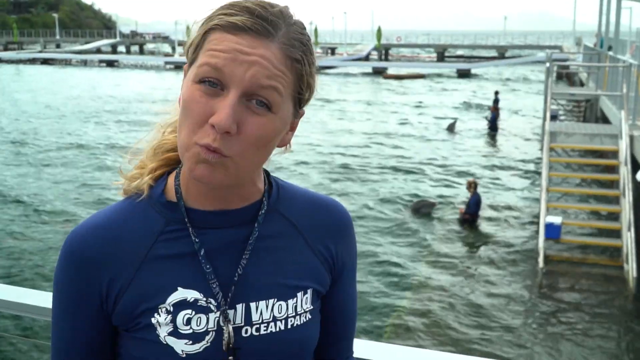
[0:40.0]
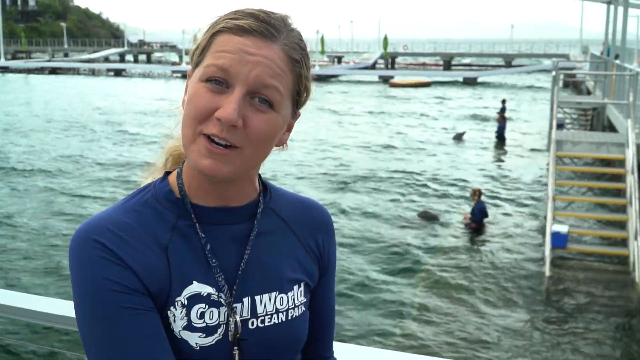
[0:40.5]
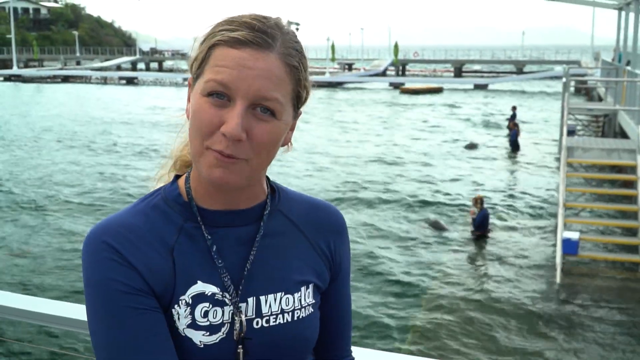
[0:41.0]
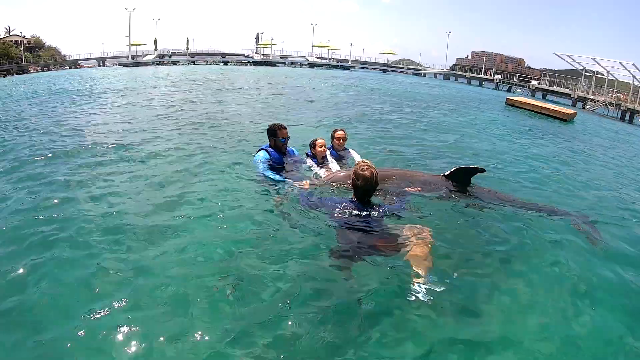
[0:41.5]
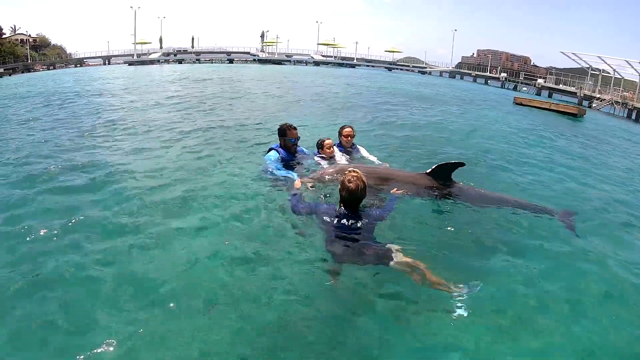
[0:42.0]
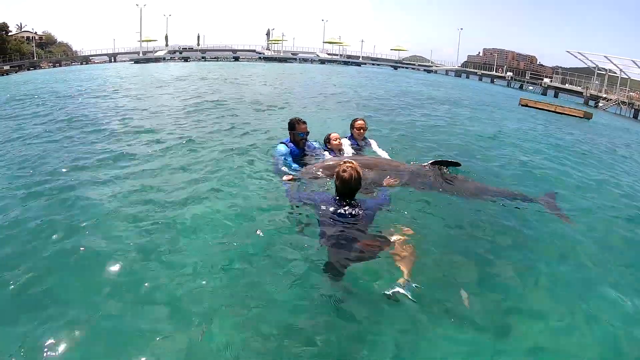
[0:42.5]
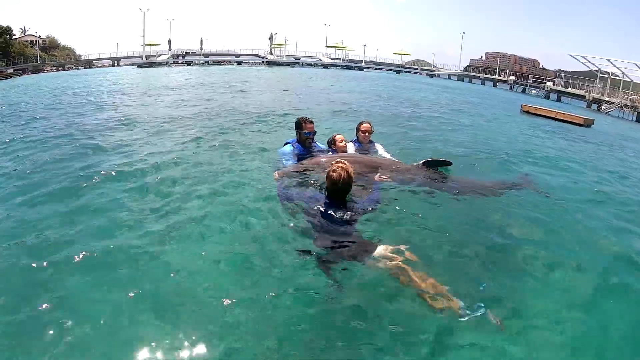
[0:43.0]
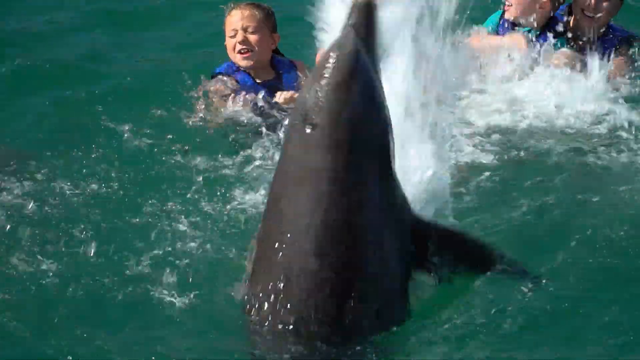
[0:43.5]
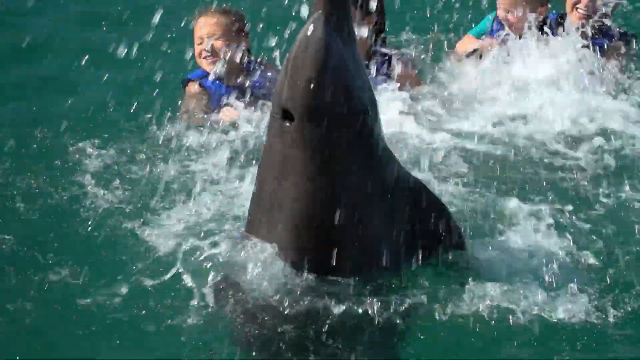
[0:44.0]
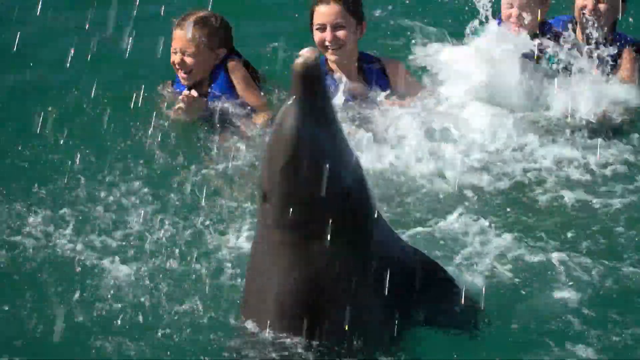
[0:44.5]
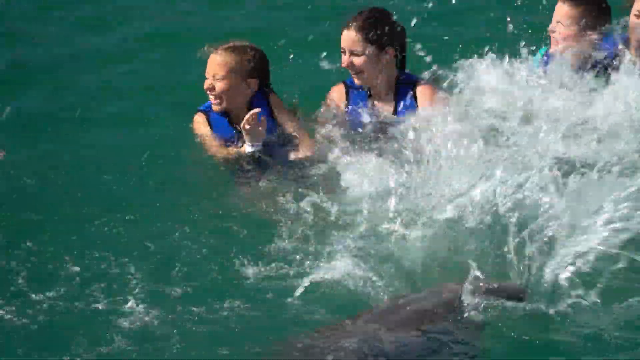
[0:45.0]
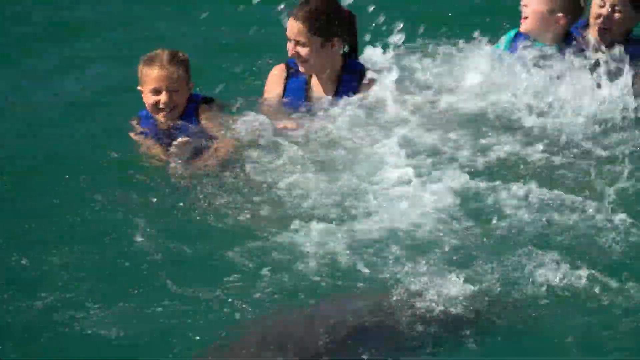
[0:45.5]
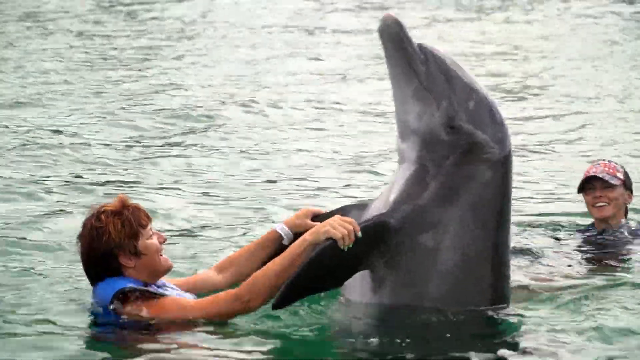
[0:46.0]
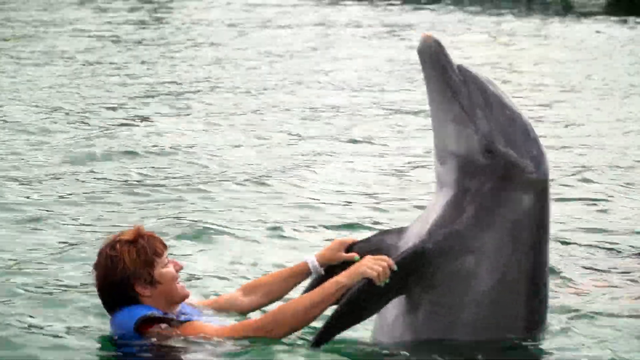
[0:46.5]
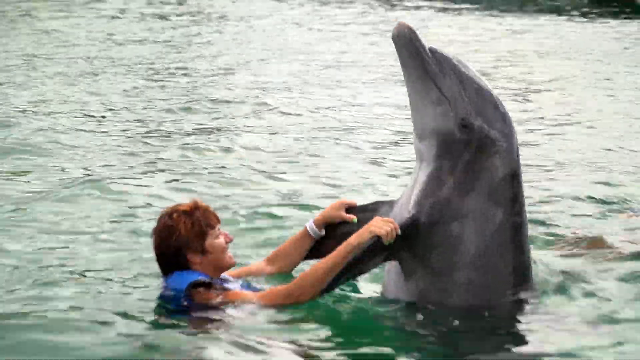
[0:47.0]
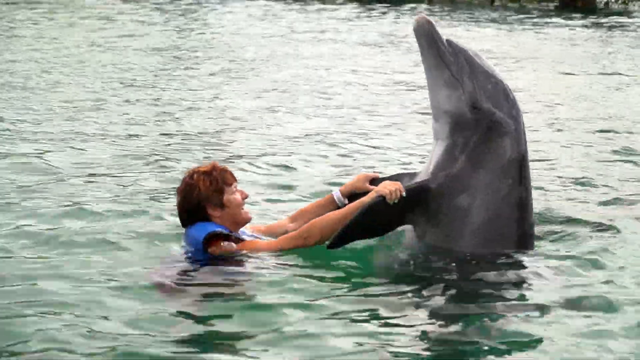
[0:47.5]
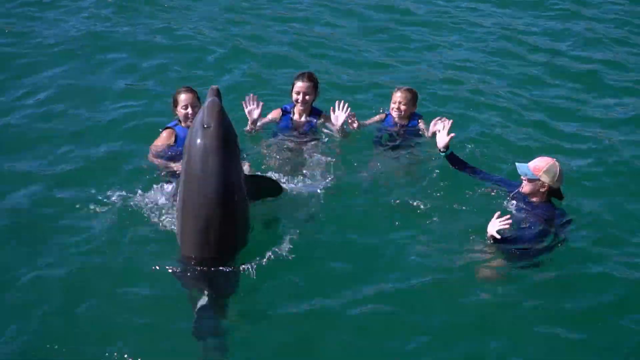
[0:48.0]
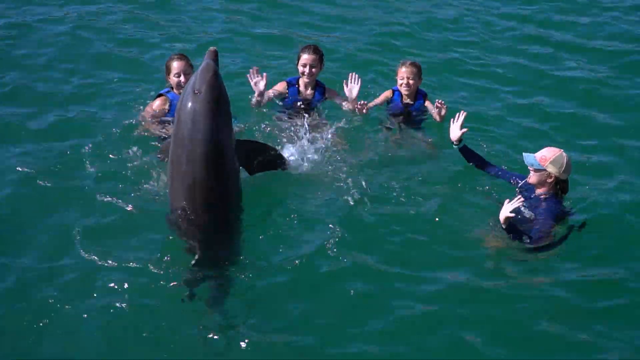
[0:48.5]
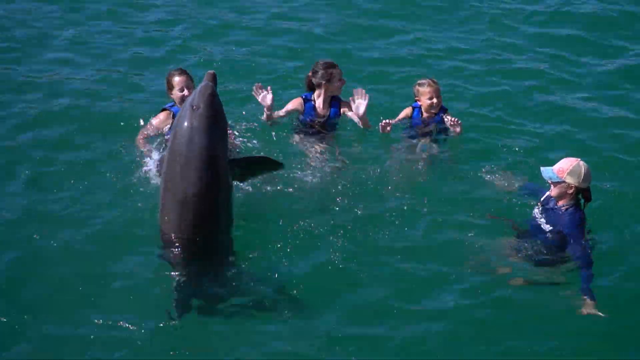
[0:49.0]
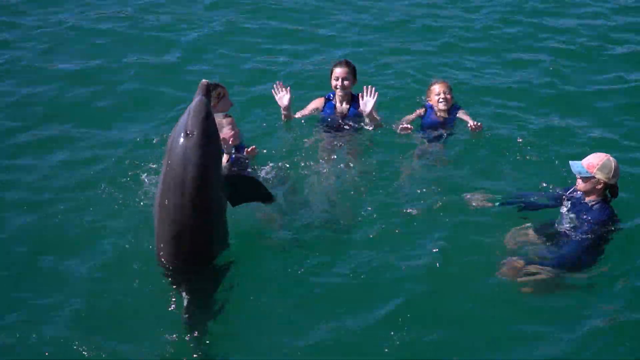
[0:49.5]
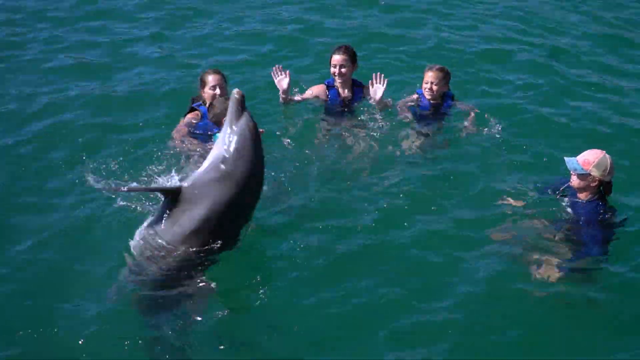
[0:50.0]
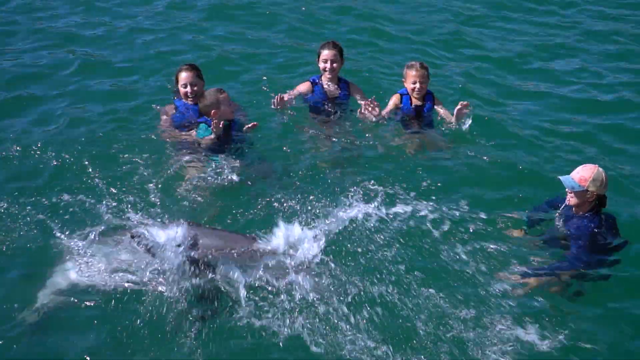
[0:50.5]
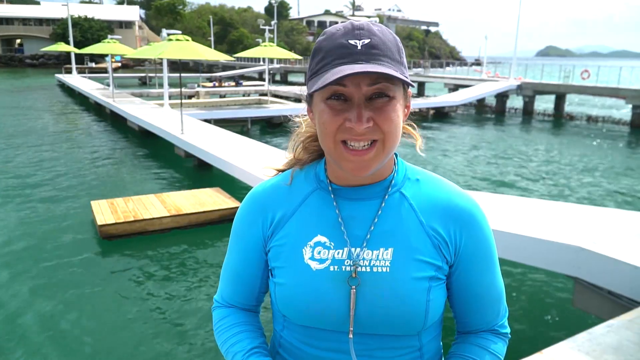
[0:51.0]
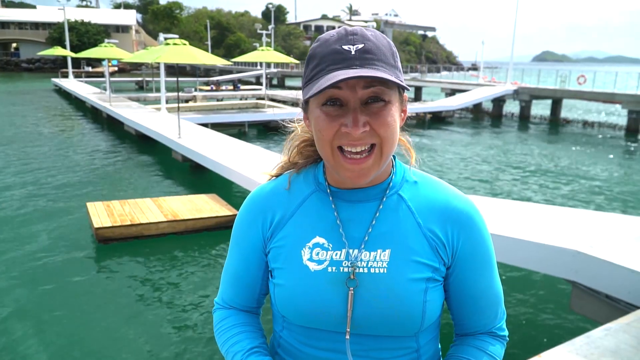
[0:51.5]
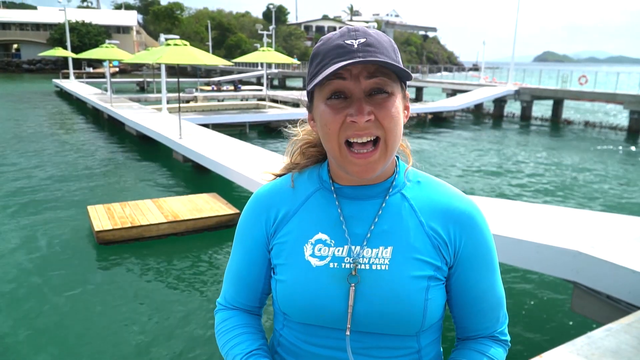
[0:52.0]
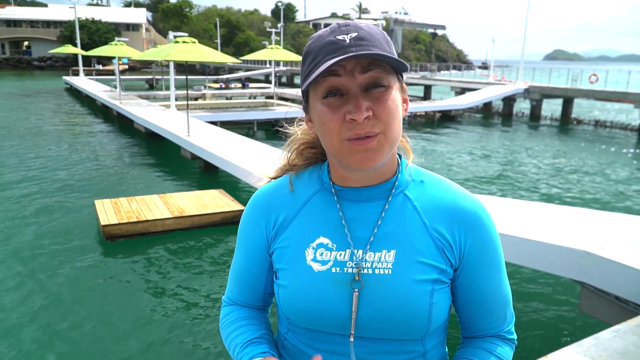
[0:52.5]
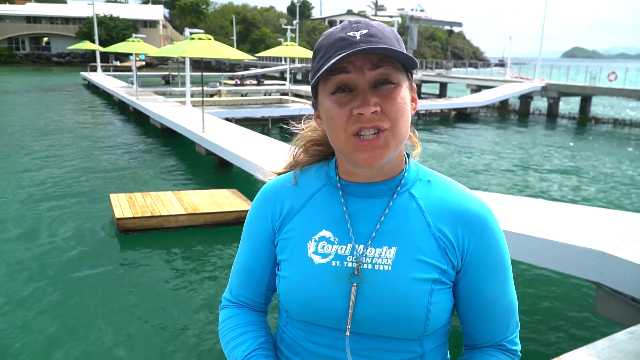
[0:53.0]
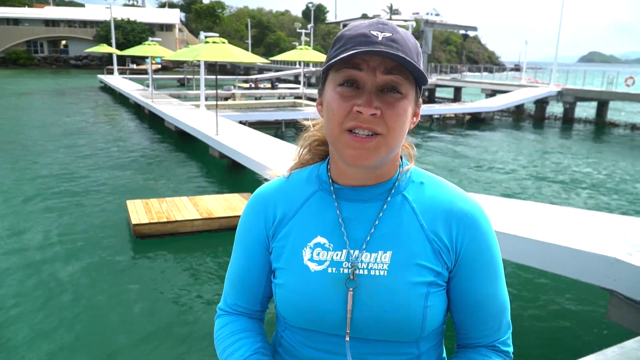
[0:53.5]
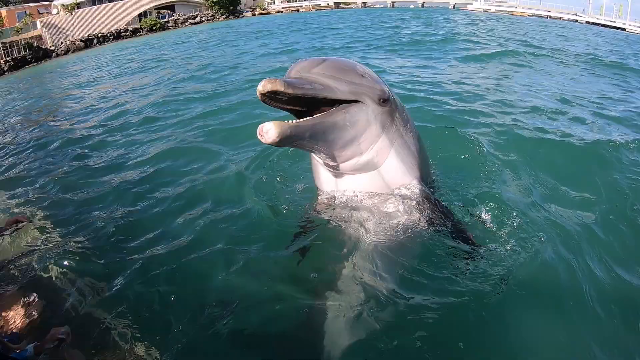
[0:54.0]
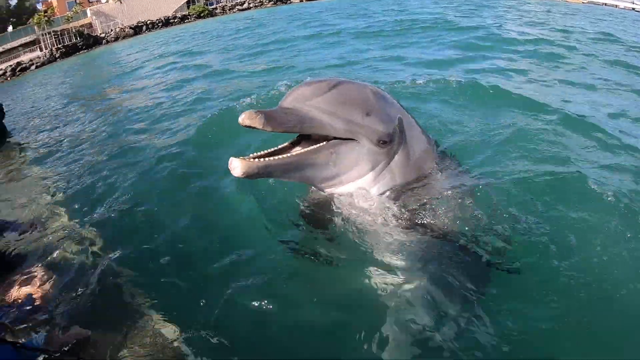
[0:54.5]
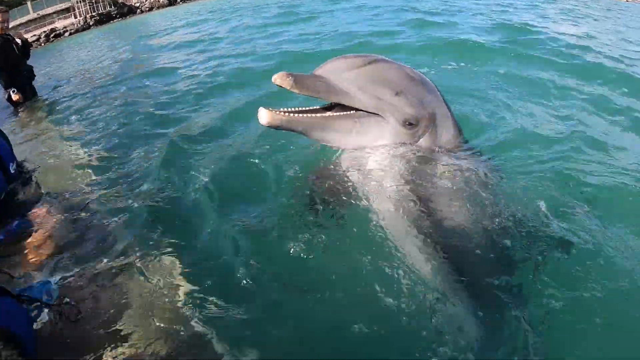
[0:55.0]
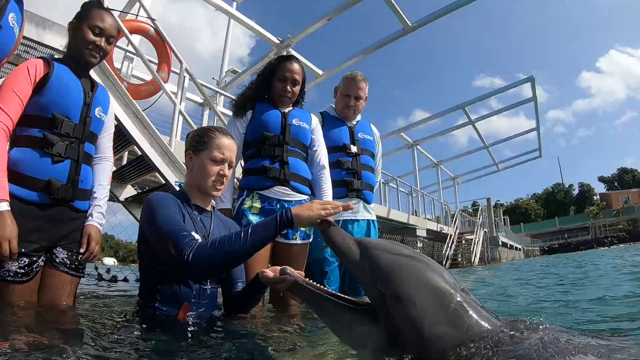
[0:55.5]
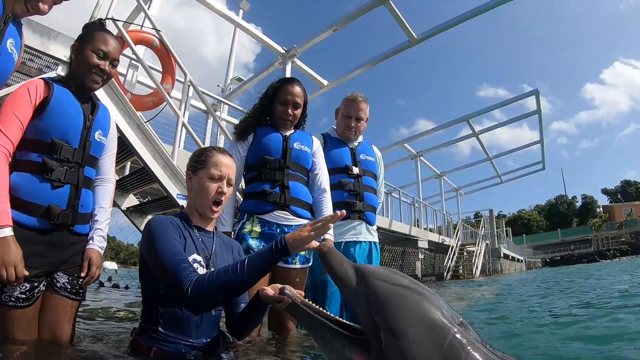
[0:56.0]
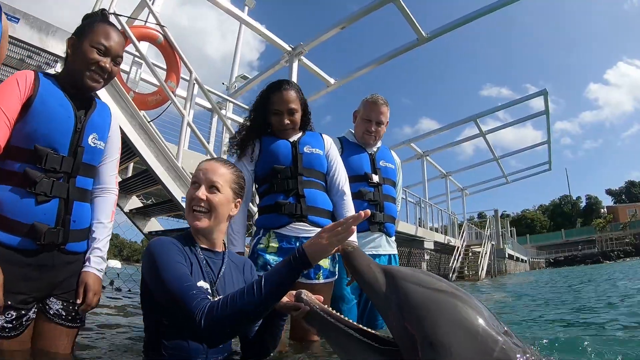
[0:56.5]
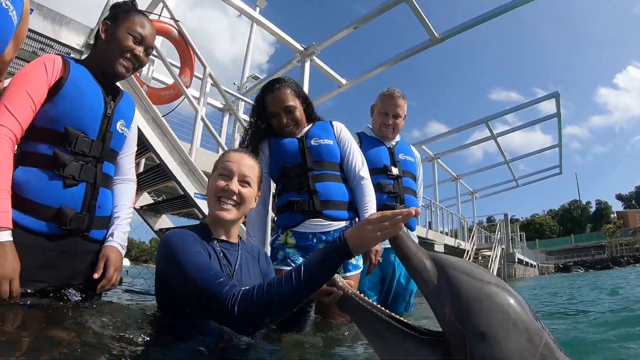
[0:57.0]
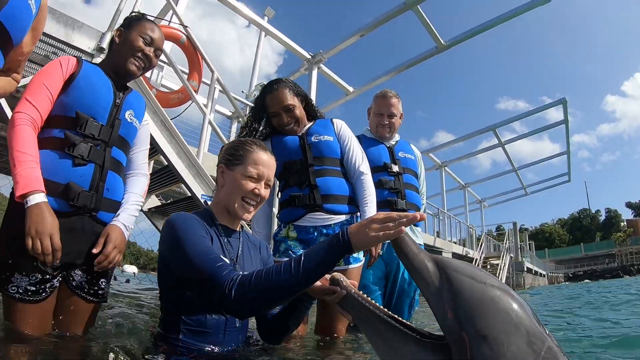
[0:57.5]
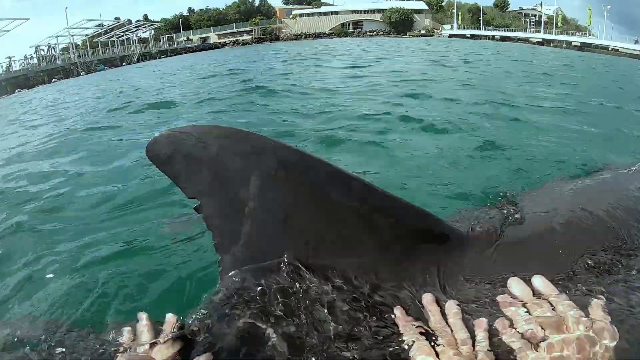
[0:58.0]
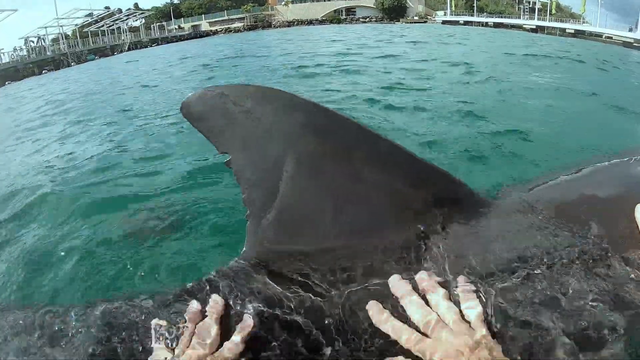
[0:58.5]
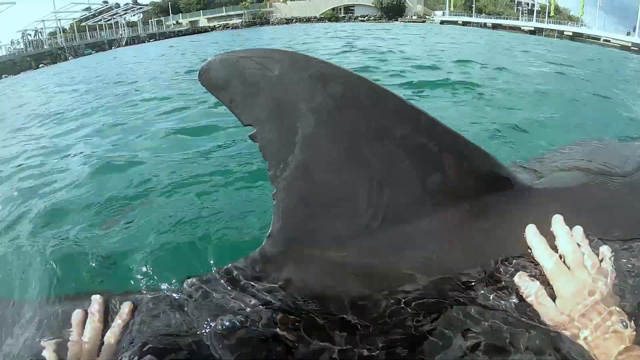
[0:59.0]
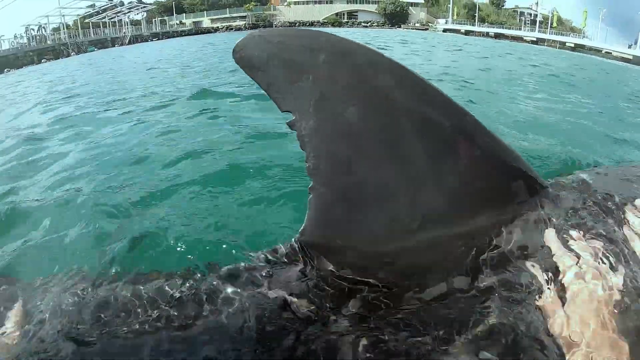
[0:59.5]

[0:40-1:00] The instructor talks to the camera again. Another shot shows people swimming in the water: two adults and a kid together with the instructor, with a dolphin in between them letting them pet its back. In another shot, the family is in the water and a dolphin splashes water at them. Then a woman holds the fins of a dolphin, and they almost look like they are dancing in the water. Next, a dolphin raised above the water waves at a group of people who wave back. Another headshot shows an instructor talking to the camera. A dolphin appears in the water, then people wearing safety jackets watch the instructor play with the dolphin. A very close shot shows the back of a dolphin and some hands petting it while submerged in the water.